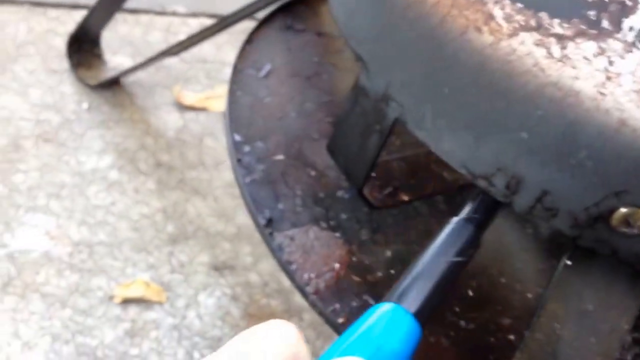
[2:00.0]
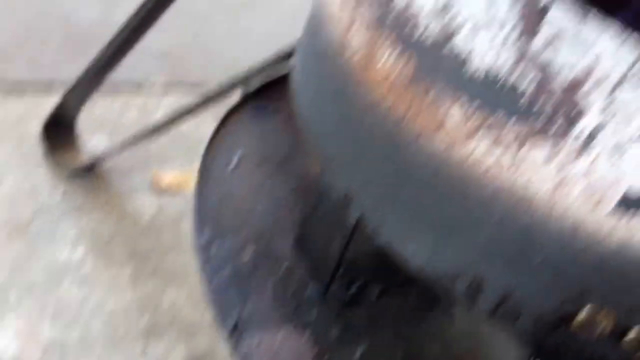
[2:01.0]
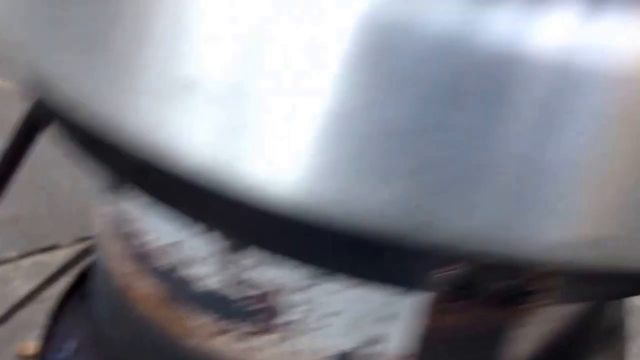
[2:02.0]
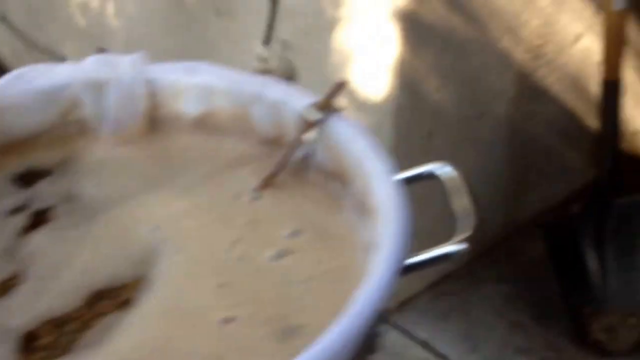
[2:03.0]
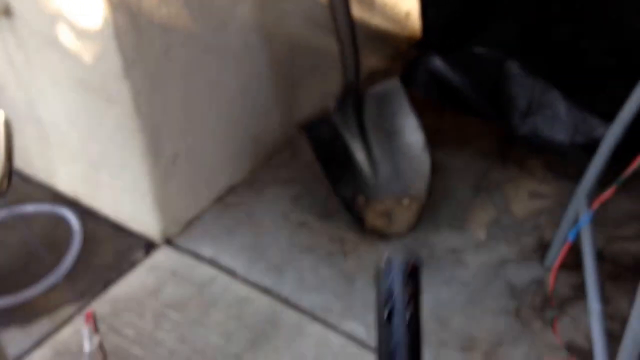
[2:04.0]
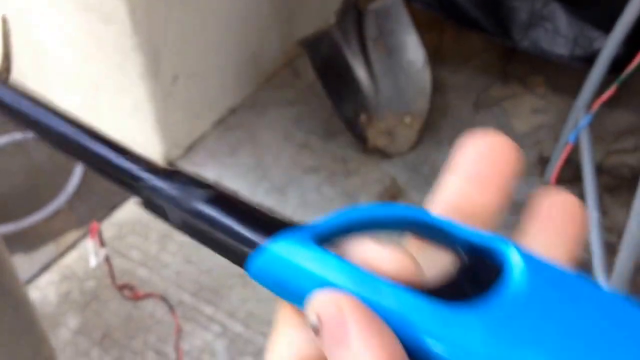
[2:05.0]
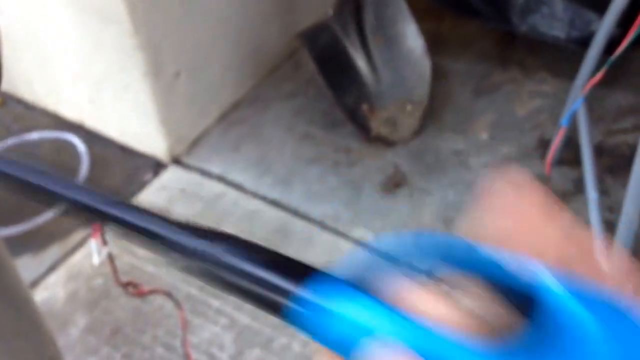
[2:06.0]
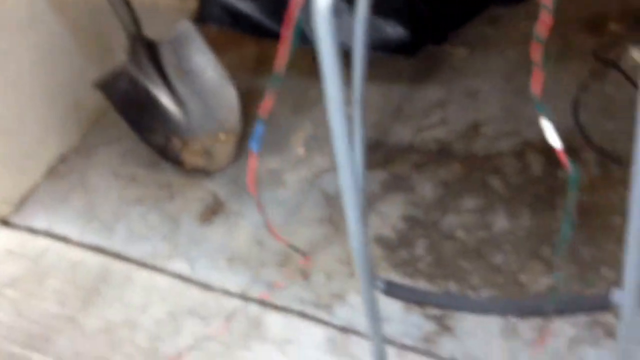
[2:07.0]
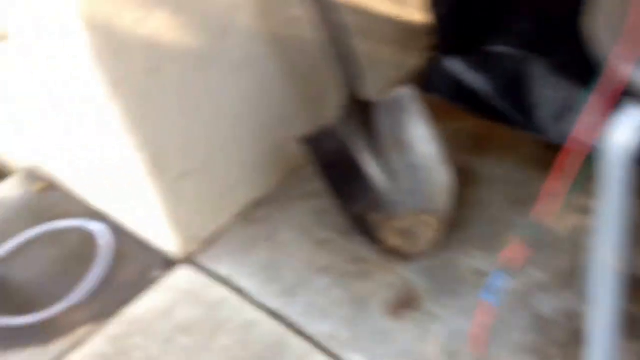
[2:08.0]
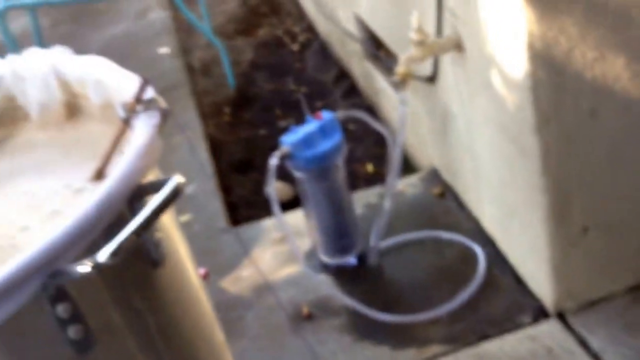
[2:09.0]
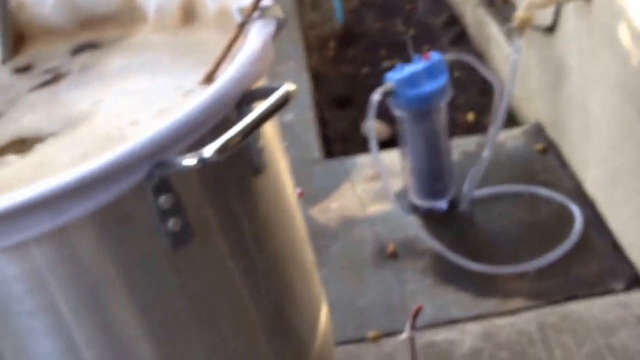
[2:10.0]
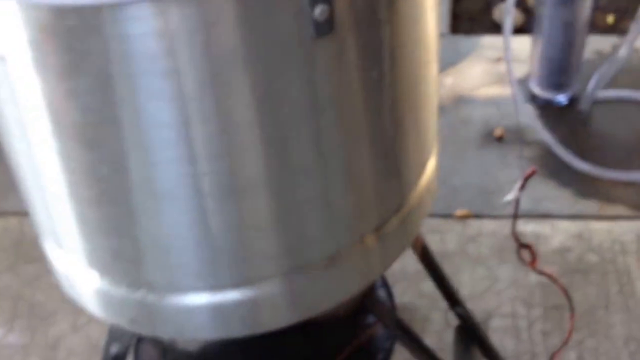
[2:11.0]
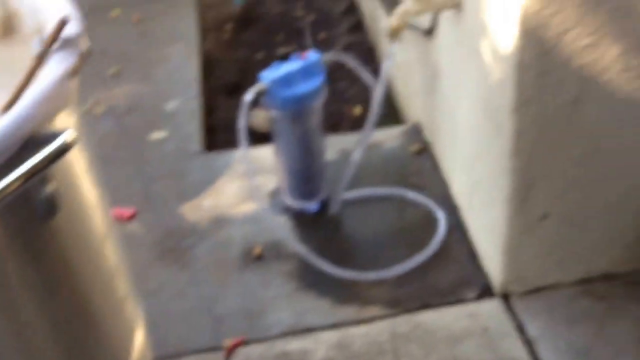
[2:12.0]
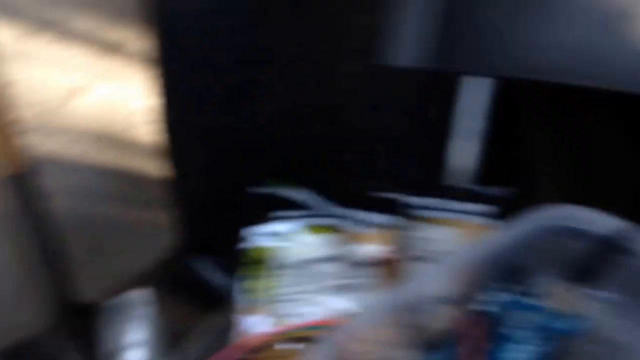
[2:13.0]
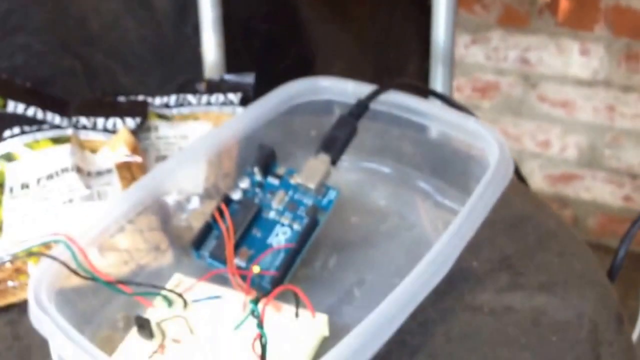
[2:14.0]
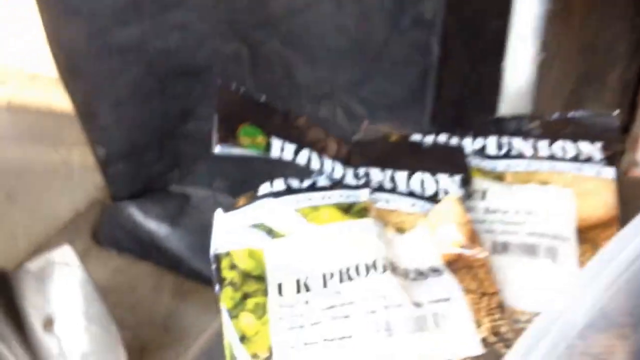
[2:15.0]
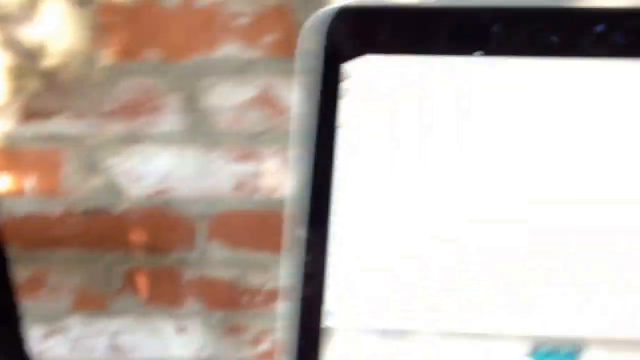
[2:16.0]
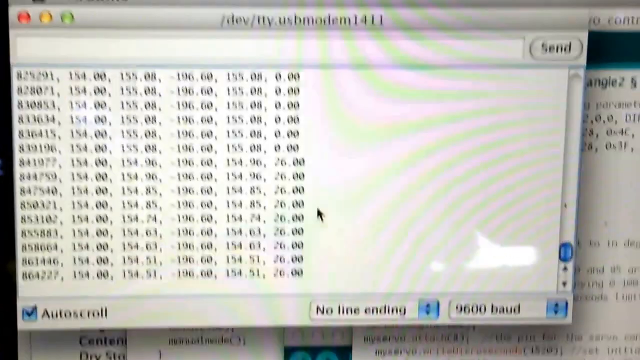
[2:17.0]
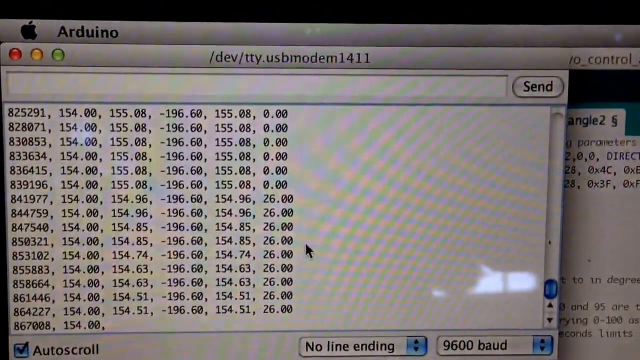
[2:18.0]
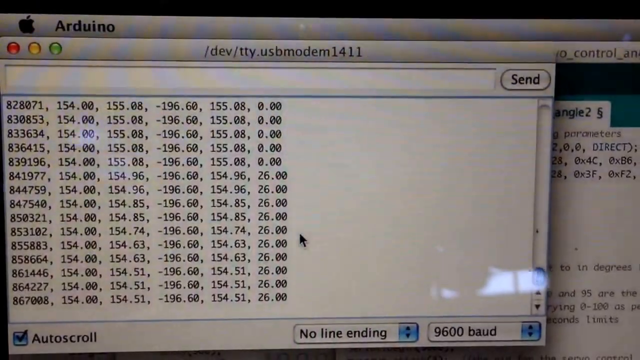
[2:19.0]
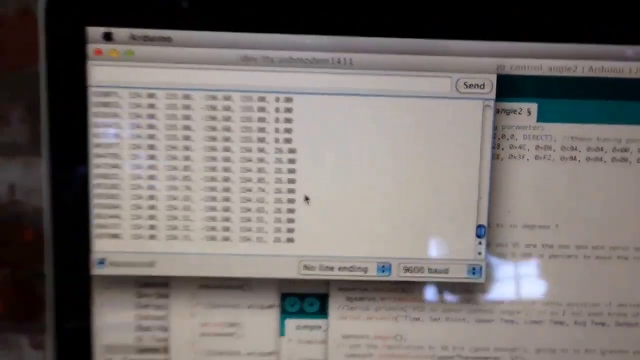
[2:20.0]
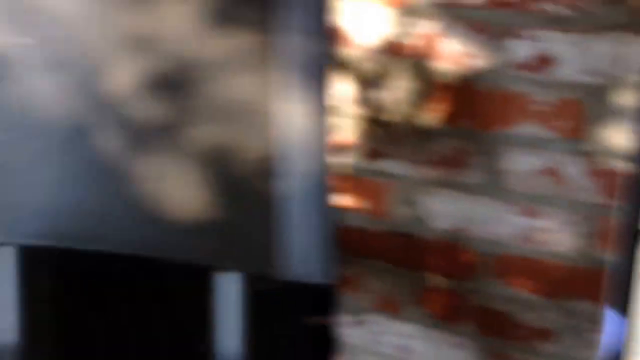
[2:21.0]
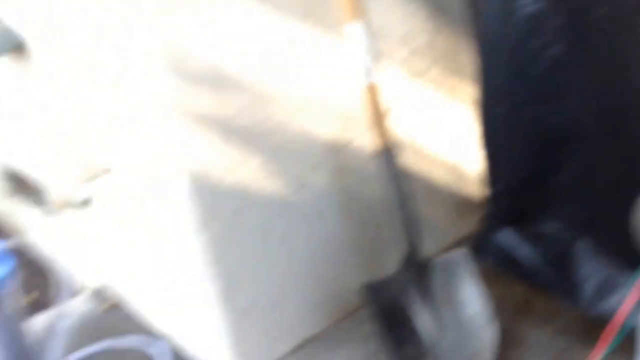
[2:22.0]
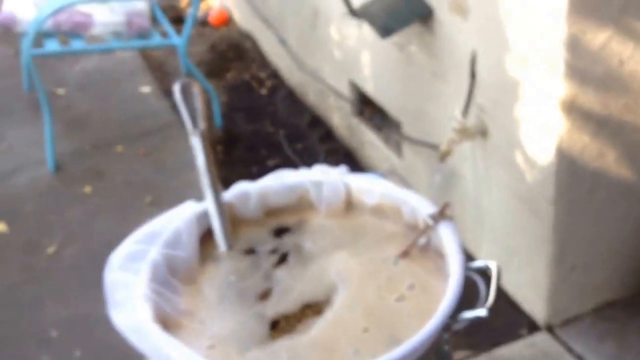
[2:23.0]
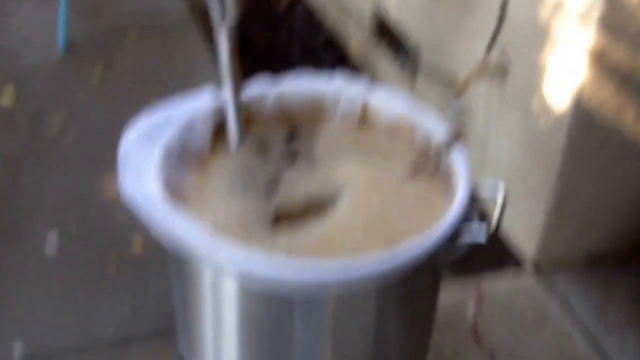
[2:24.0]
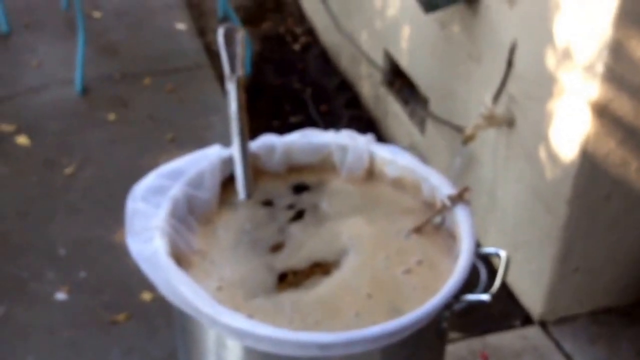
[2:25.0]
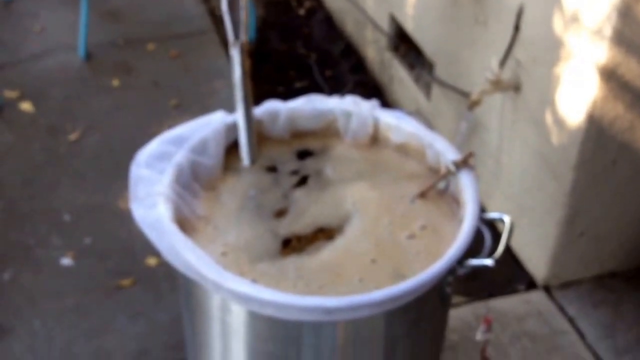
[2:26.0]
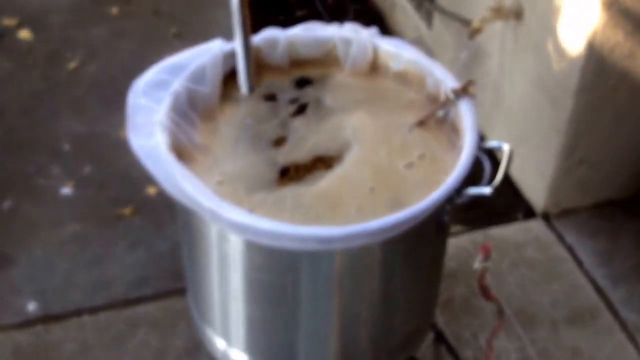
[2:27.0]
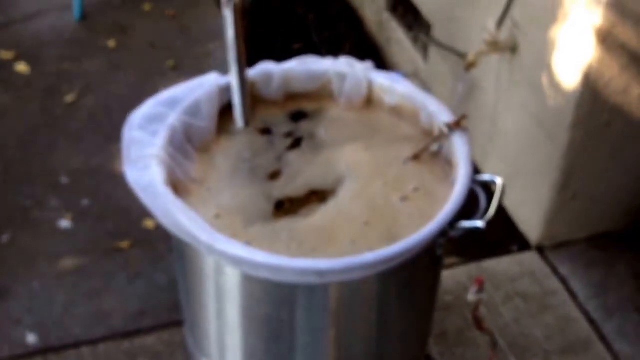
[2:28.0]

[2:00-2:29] An electric firelighter is used to light a gas stove that is heating a large pan containing brown liquid with cream foam. The camera operator holds the lighter in their left hand; it has a long black probe, a blue body and a trigger. The camera operator then moves around the scene, showing the Arduino microcontroller that controls the gas and takes the temperature of the liquid, and then what appear to be opened bags of brewing hops. The camera pans around to the screen of a macOS-based laptop, possibly a MacBook, running Arduino software. The screen shows a window containing a USB modem teletype text screen, like an old-fashioned terminal window, displaying various numbers. The camera then zooms back out and returns to focus on the brown liquid with cream foam in the large pan. A large muslin bag encompasses the whole pan, with the liquid within it. A metal stirrer is also in the pan, along with a metal temperature probe attached with wires to the Arduino microcontroller.